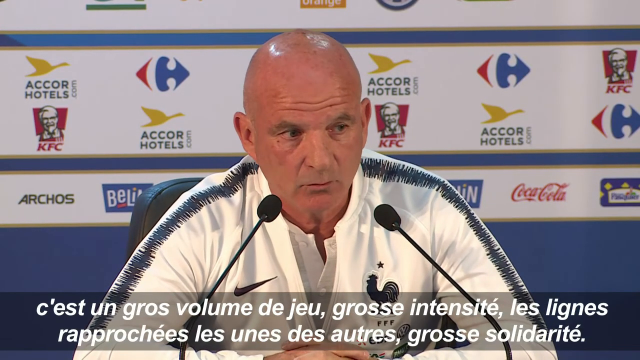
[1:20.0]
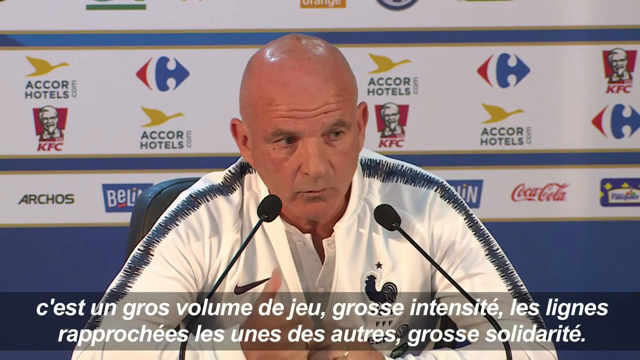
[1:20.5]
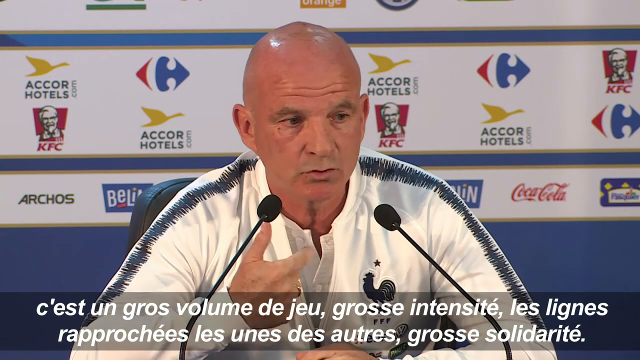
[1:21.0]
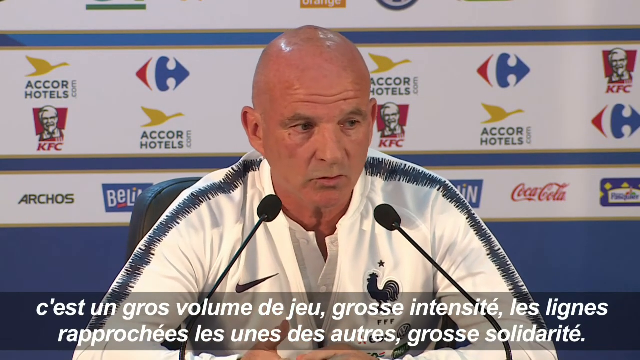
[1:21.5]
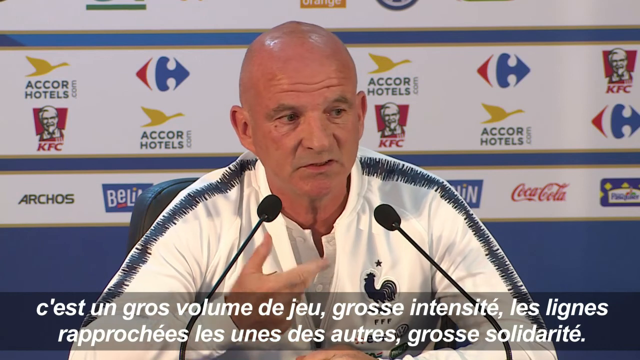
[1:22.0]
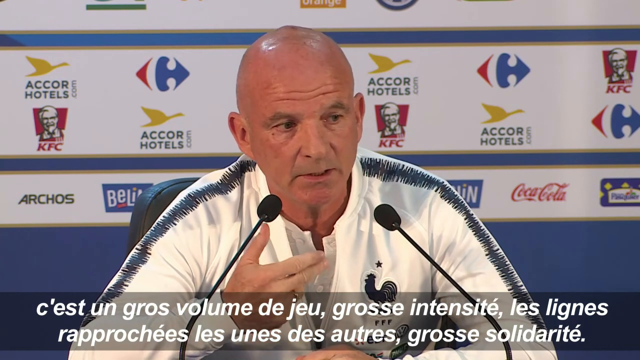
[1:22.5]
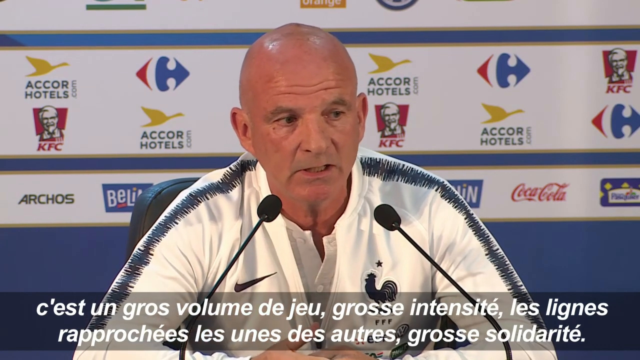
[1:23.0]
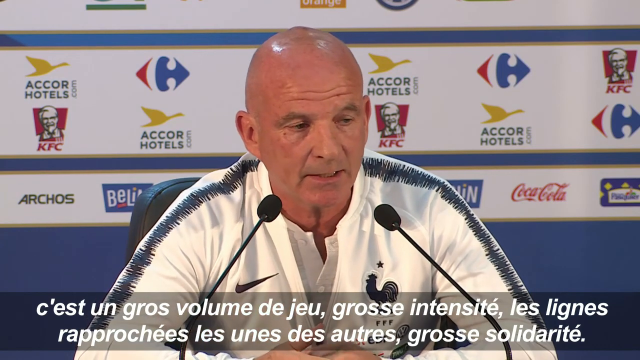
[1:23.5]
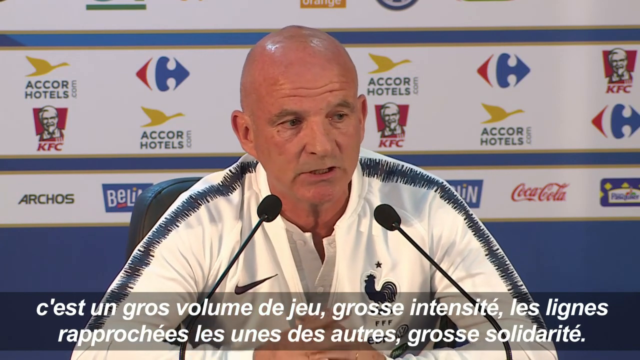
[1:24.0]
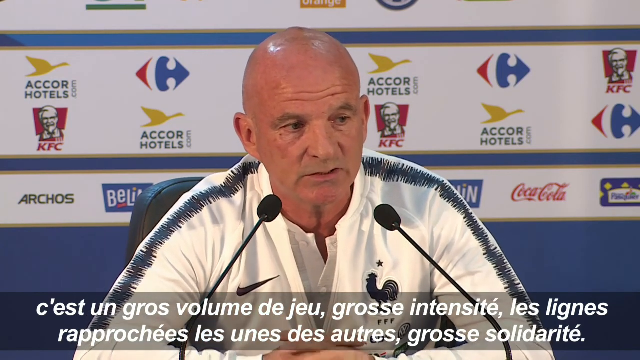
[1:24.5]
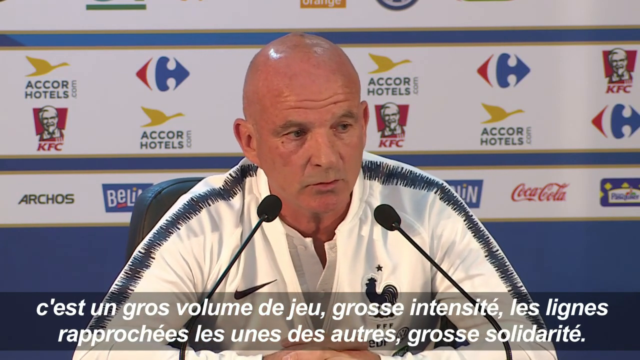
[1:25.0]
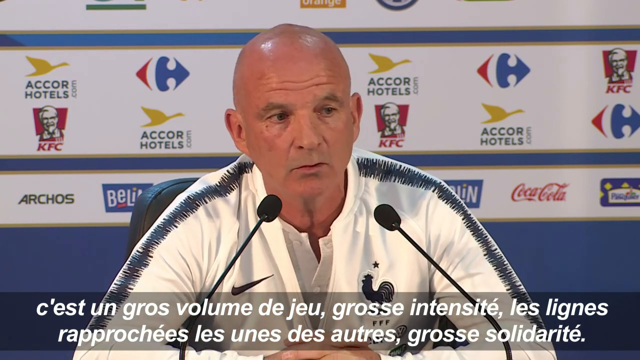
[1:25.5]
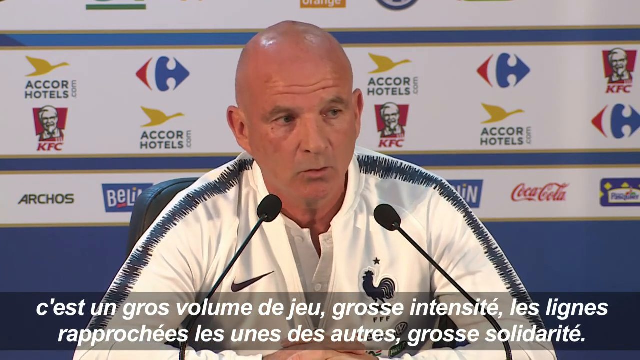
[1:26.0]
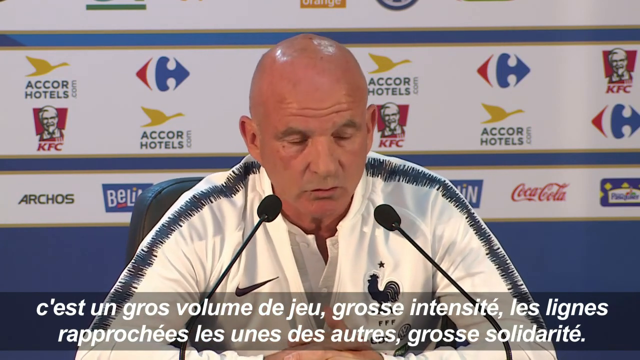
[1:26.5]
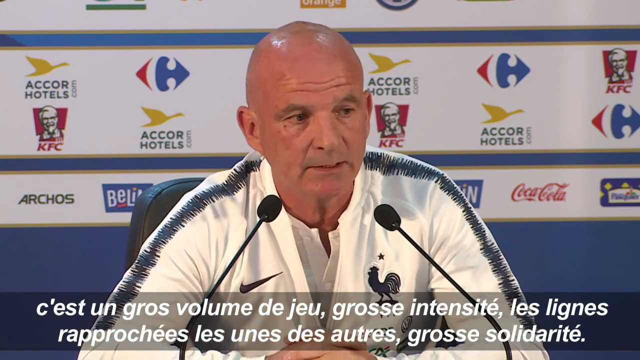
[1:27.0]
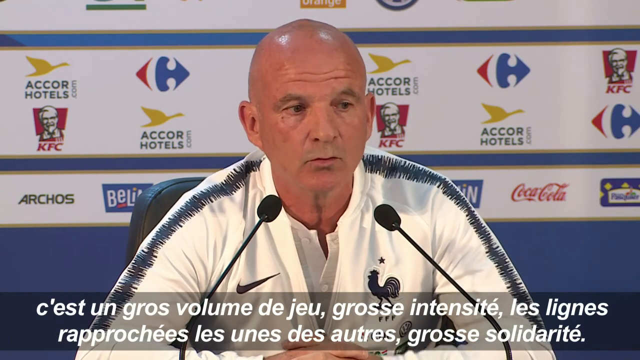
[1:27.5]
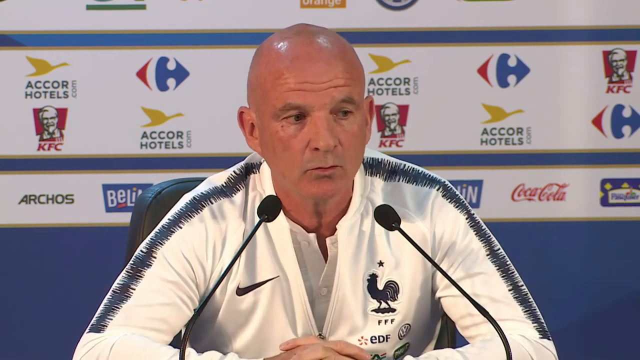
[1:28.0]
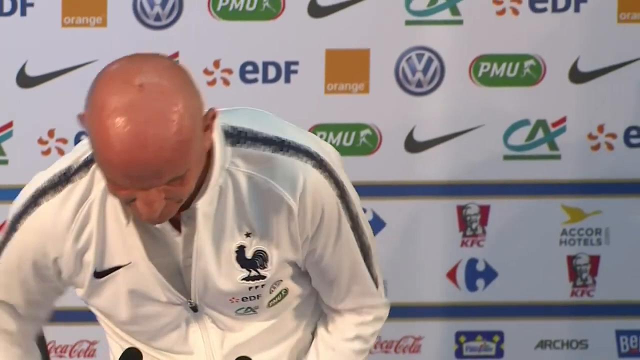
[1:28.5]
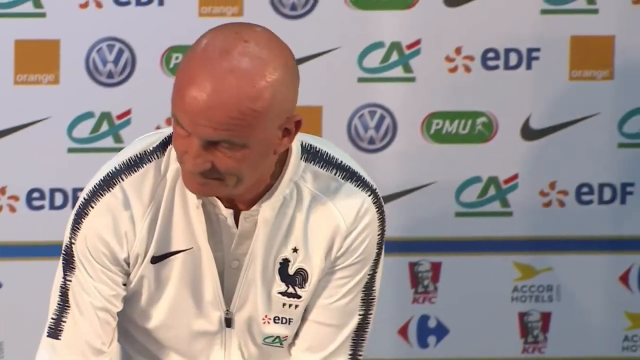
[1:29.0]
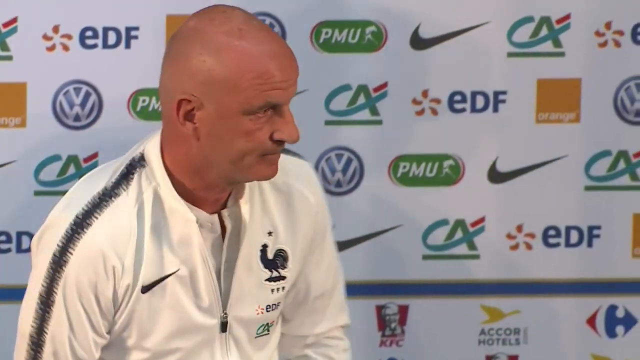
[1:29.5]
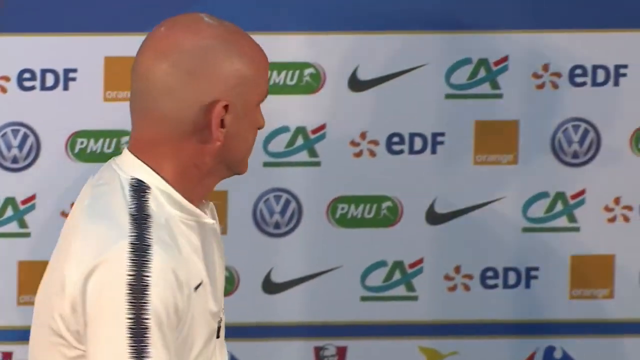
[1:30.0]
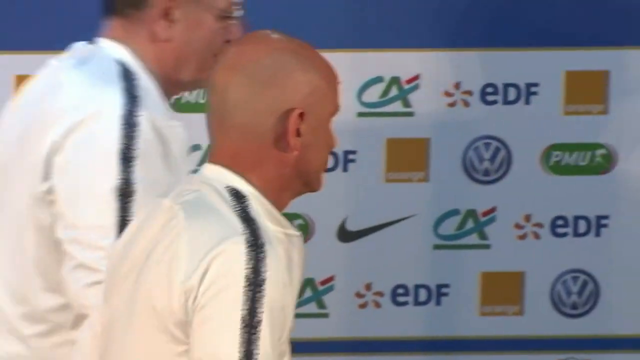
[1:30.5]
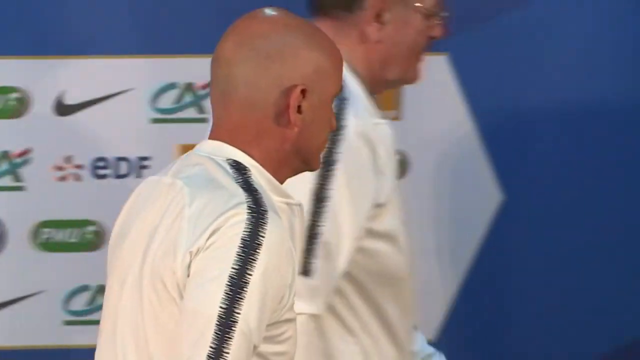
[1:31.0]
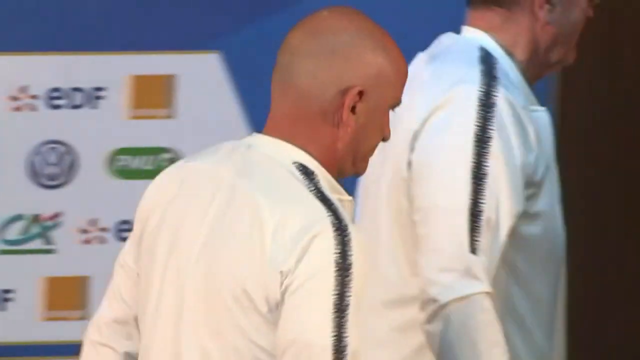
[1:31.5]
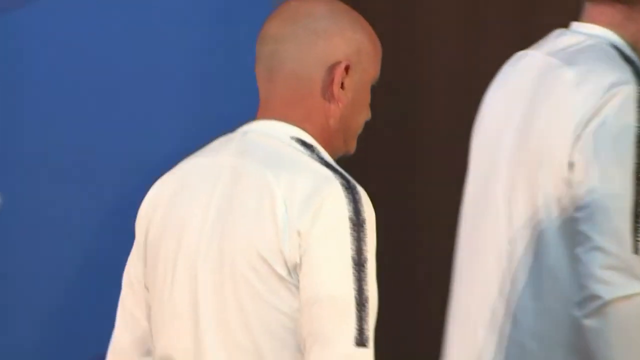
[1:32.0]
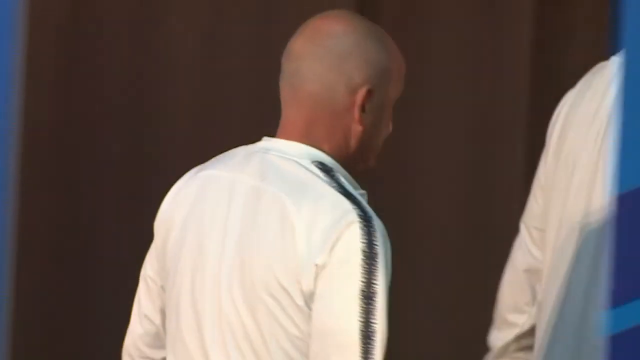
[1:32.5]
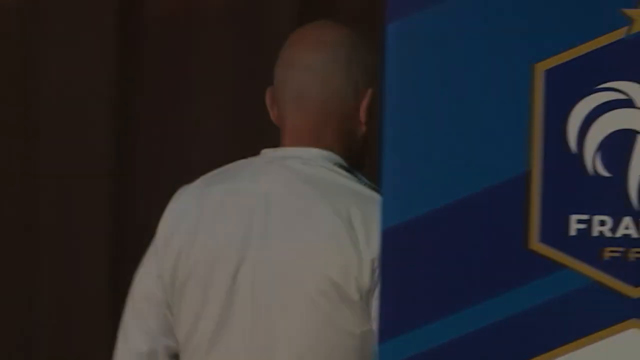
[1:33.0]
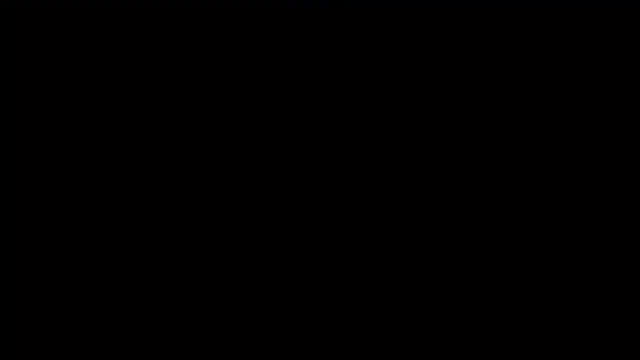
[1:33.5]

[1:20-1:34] The head-and-shoulders shot of the bald man talking continues; as he speaks he nods his head as if to emphasise what he is saying. A slightly different shot of the same scene shows him standing up from the table. The camera moves up to follow him, cropping him at head and shoulders as he turns to the right and starts to walk off to the right, while the older man walks past behind him to lead them both out of the room, the camera tracking them. The footage begins to darken as they walk past the background with advertising symbols for the likes of Orange, Nike and EDF, and behind the blue pull-up standee with the France logo on the front. The picture then fades completely to black.